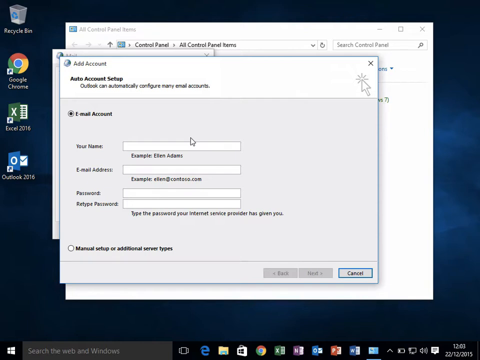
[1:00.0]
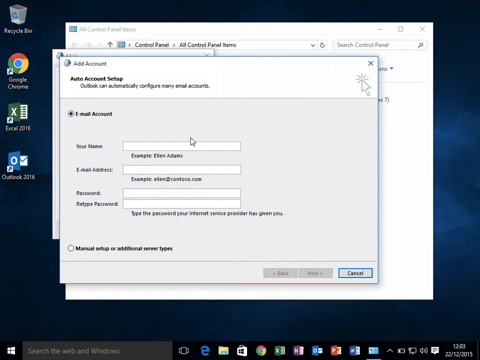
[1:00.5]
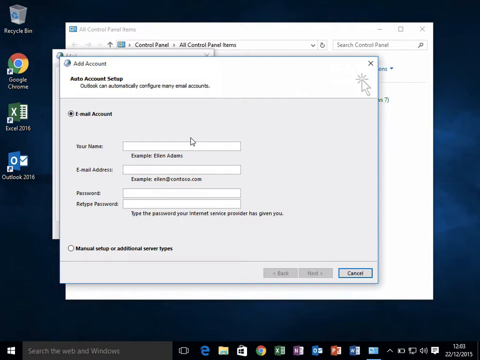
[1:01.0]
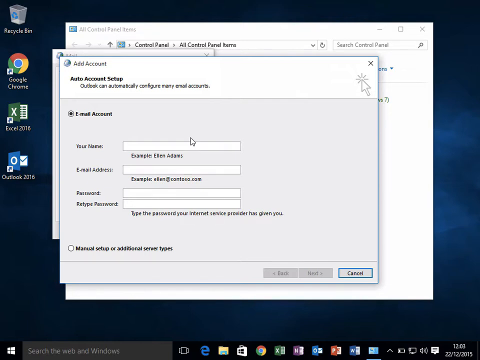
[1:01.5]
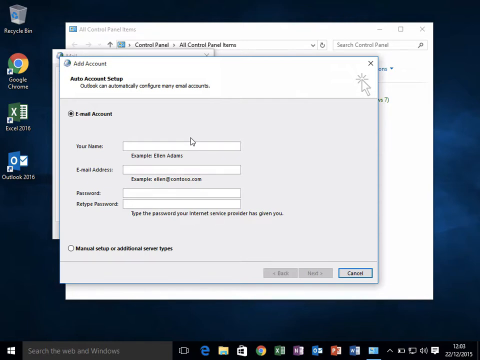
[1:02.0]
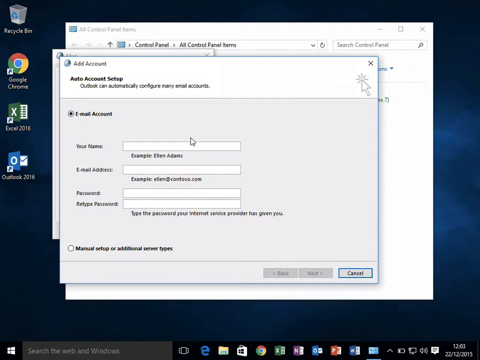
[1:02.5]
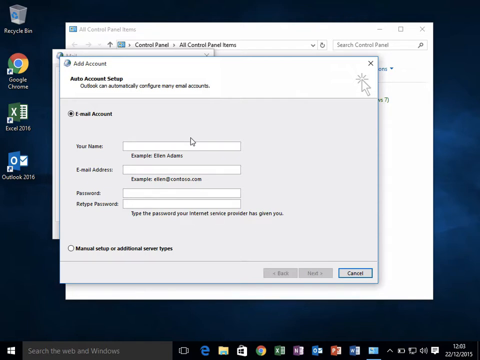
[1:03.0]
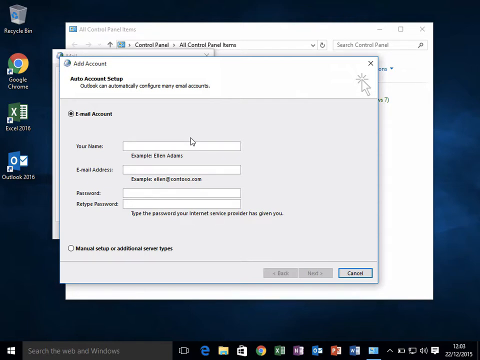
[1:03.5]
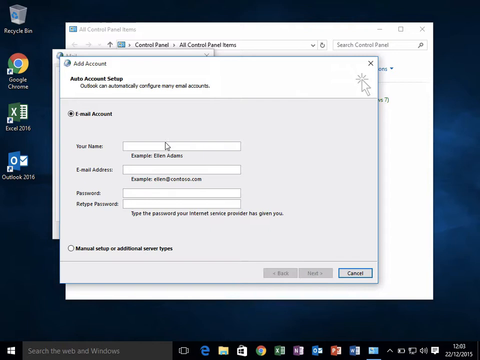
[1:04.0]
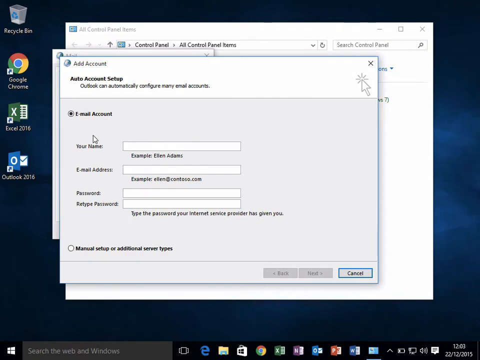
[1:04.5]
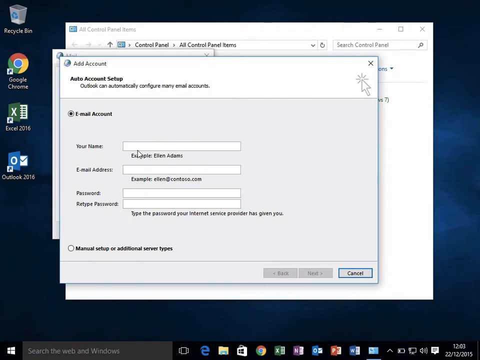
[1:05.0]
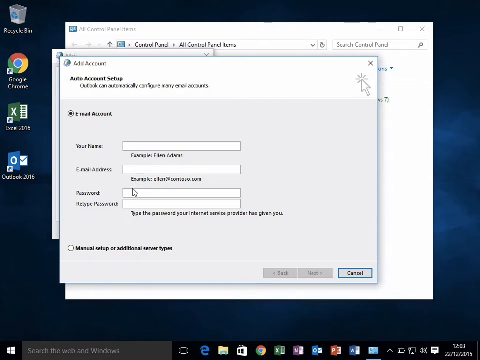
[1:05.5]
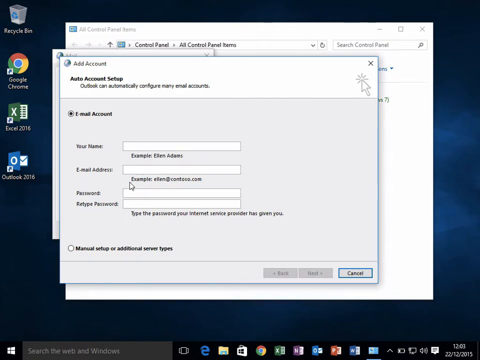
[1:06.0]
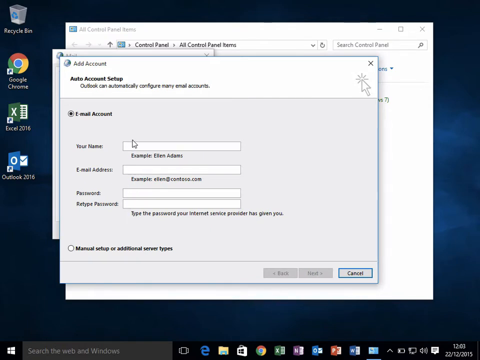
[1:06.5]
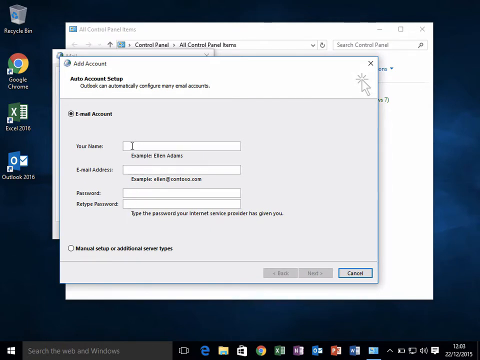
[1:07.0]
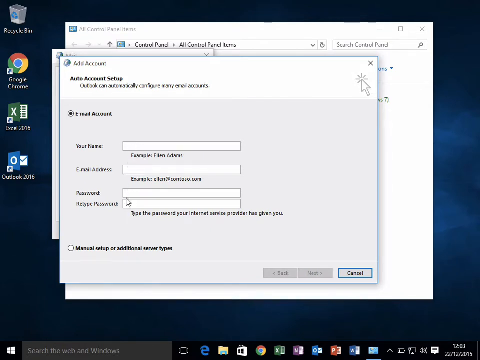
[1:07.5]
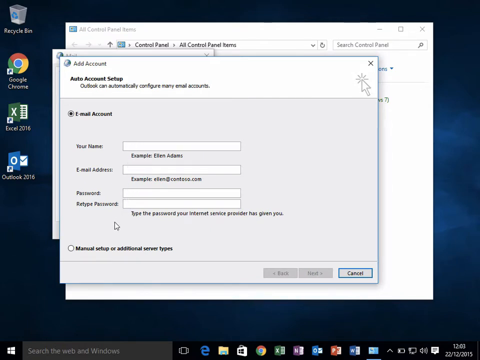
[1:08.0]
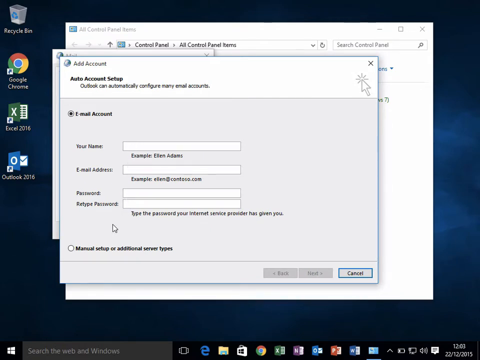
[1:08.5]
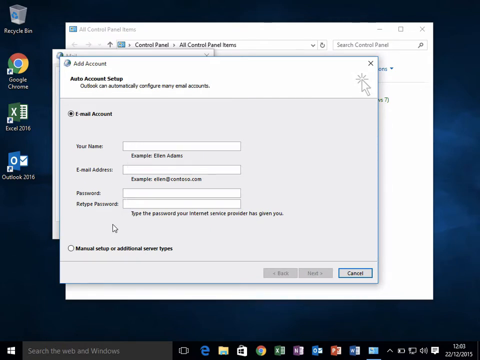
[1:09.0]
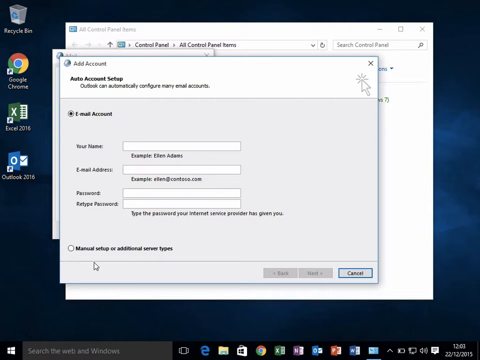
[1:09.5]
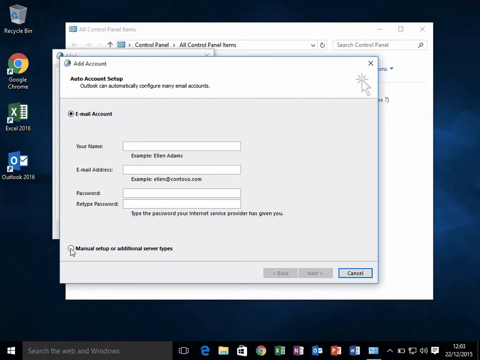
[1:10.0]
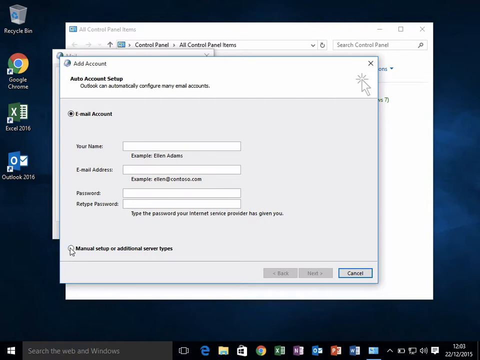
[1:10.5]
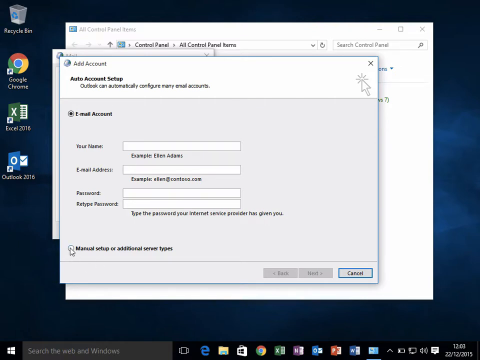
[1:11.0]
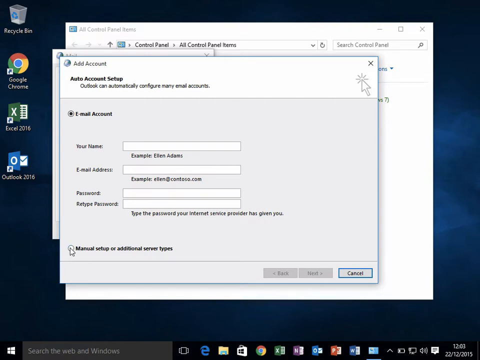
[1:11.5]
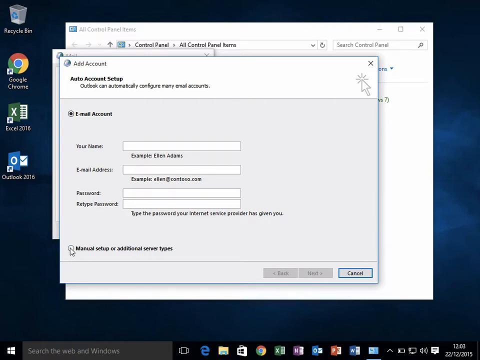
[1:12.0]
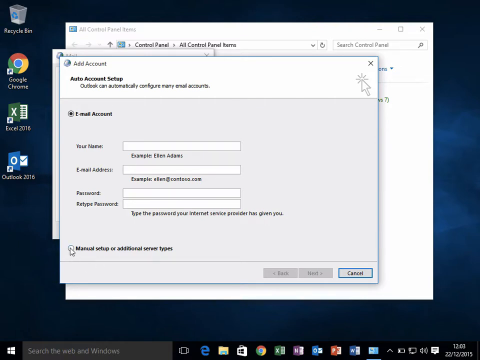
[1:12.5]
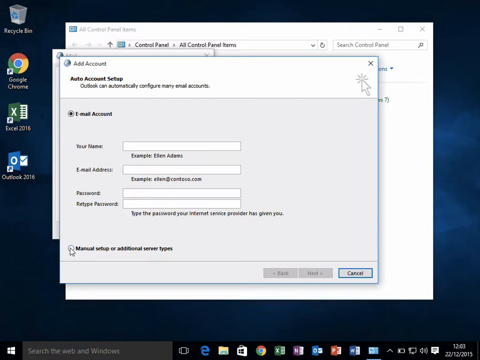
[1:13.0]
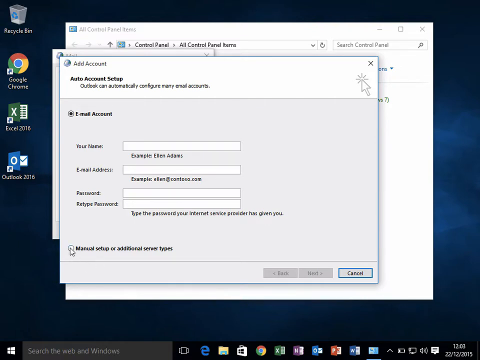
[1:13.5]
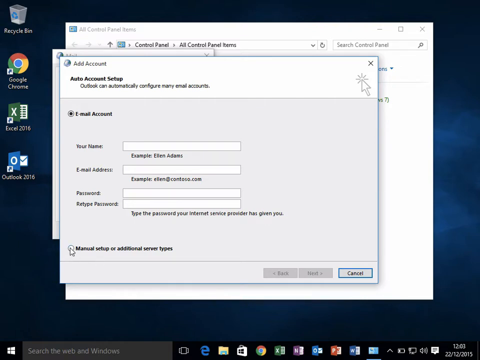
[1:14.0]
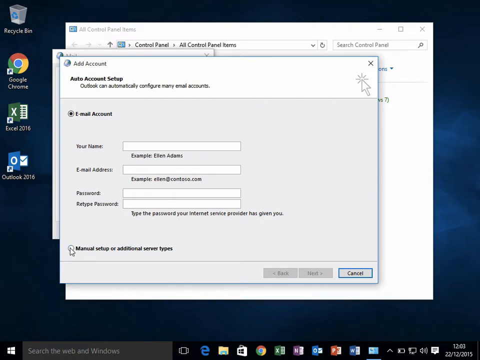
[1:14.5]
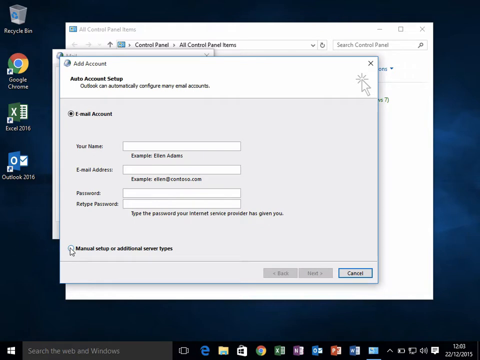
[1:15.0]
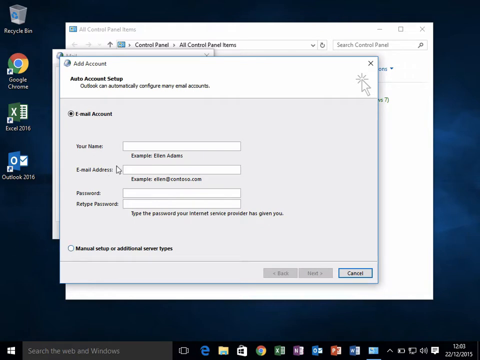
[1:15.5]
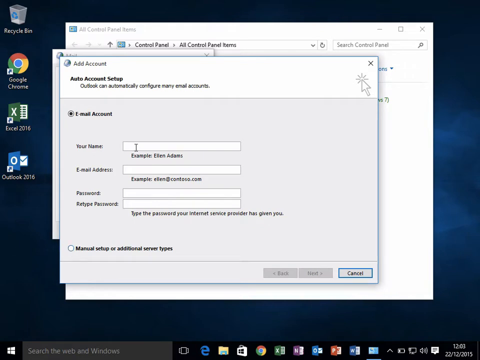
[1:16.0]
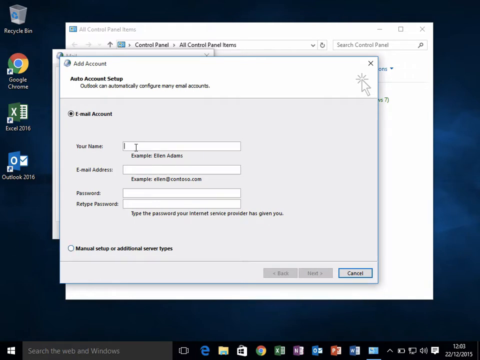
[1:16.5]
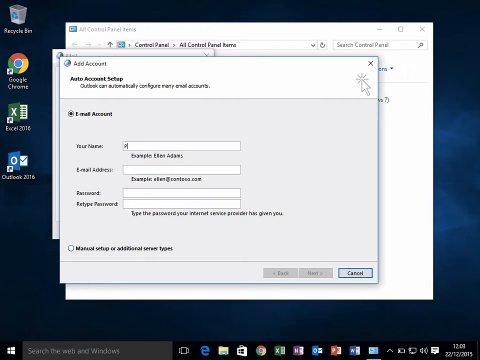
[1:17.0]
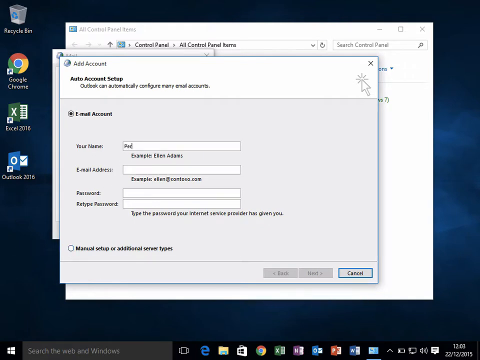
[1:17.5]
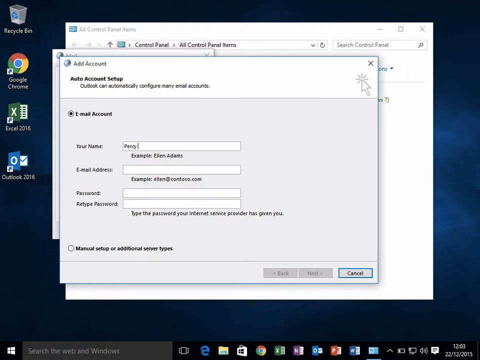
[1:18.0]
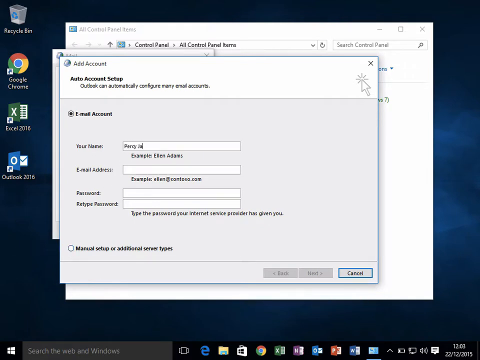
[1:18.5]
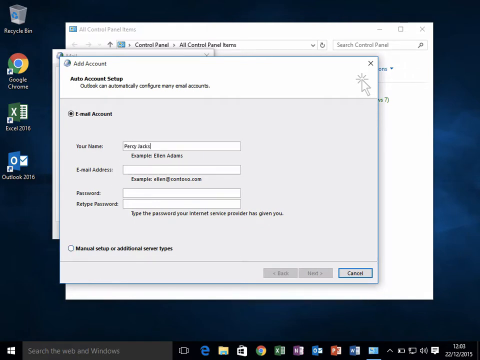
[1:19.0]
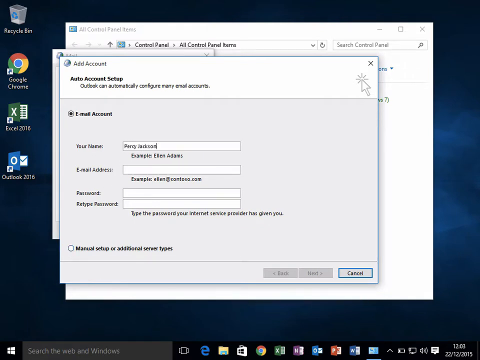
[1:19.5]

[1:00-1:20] The mouse pointer moves to the left, then down, up, and down again, and goes to a small circle in the bottom left corner of the open window, next to the text "Manual setup for additional server types". The user does not click it. Instead, the pointer goes up to the right onto the text box labeled your name, clicks it, and the user types the name "Percy Jackson". The dark blue desktop is still visible in the background, along with the taskbar at the bottom. A Windows logo is in the bottom left corner, and to its right is a search bar that says "search the web and Windows".